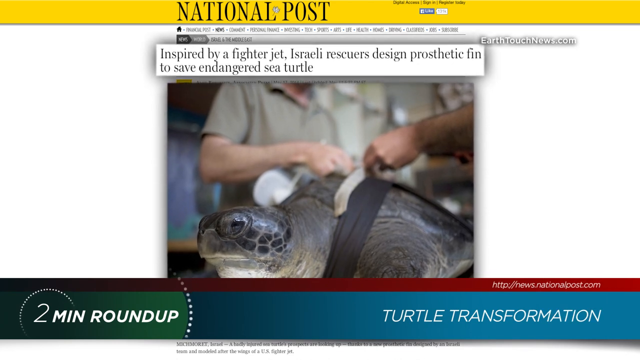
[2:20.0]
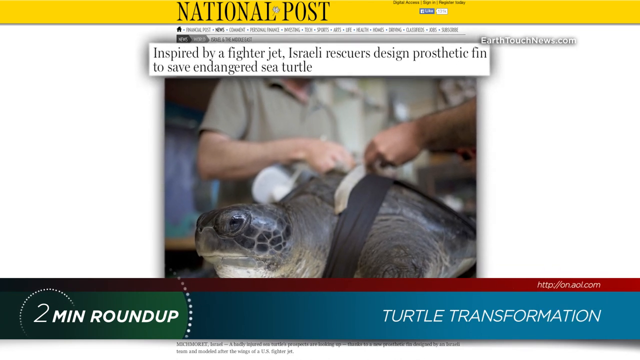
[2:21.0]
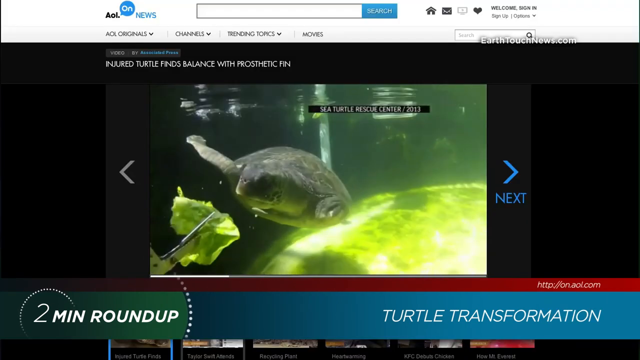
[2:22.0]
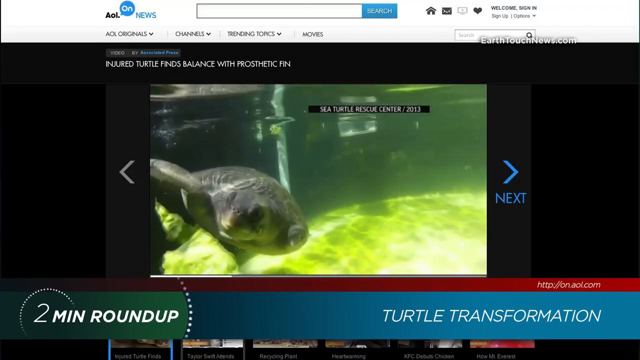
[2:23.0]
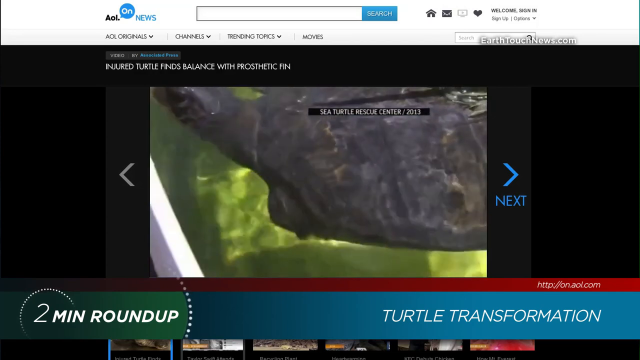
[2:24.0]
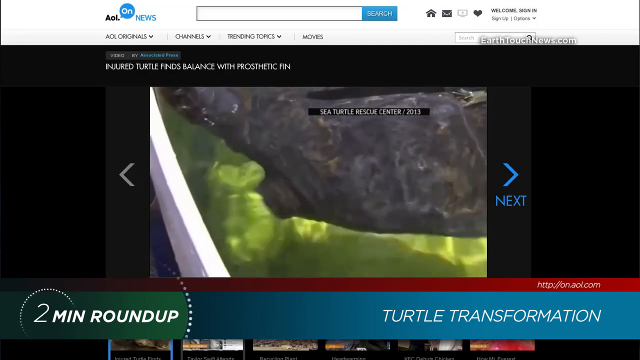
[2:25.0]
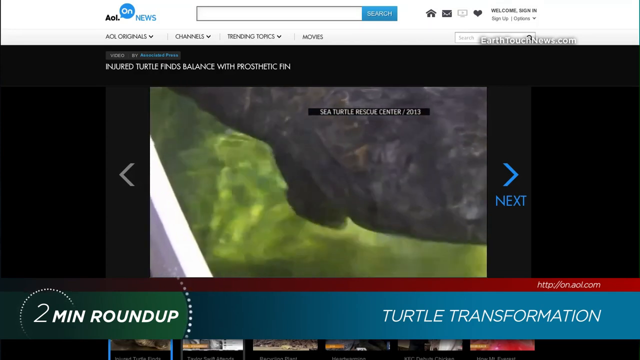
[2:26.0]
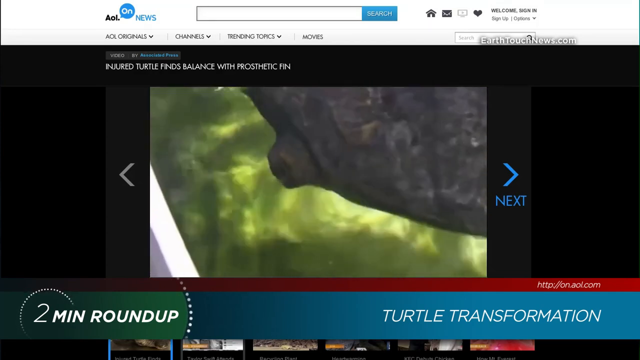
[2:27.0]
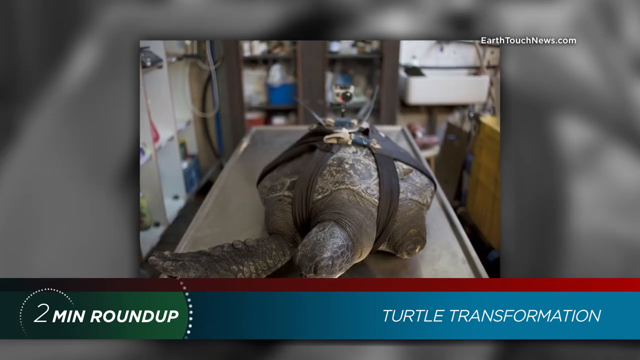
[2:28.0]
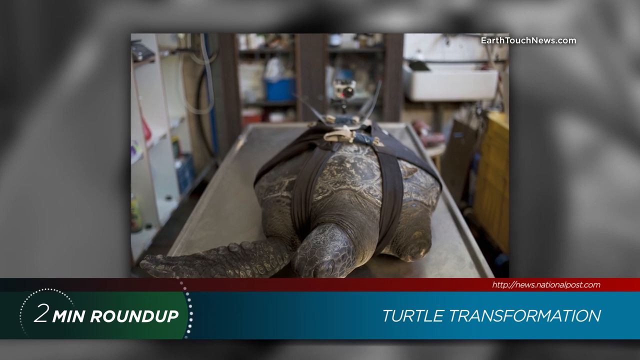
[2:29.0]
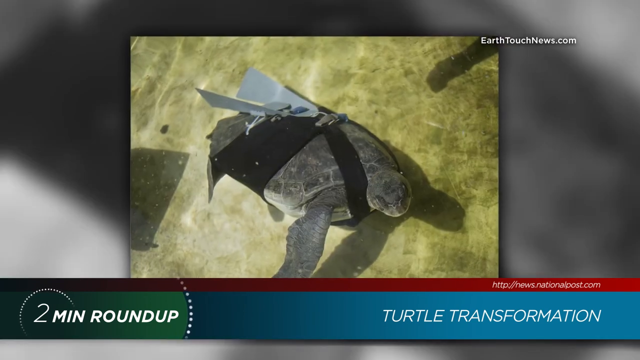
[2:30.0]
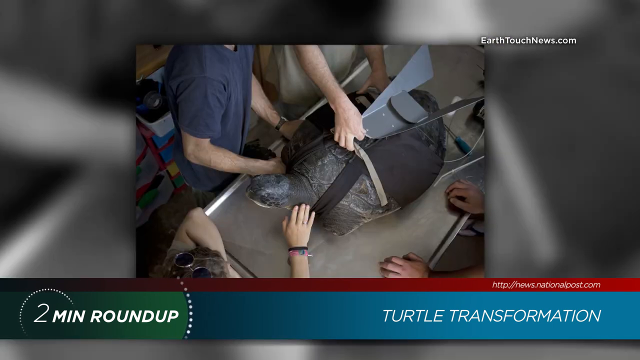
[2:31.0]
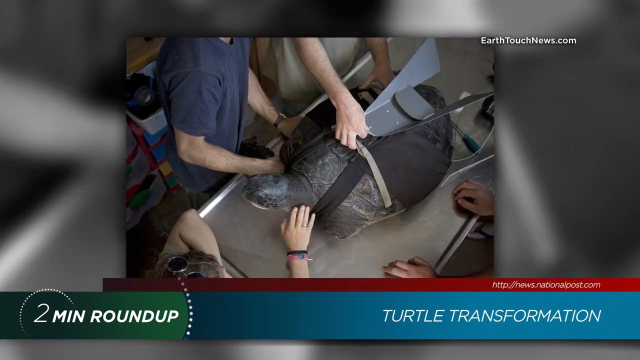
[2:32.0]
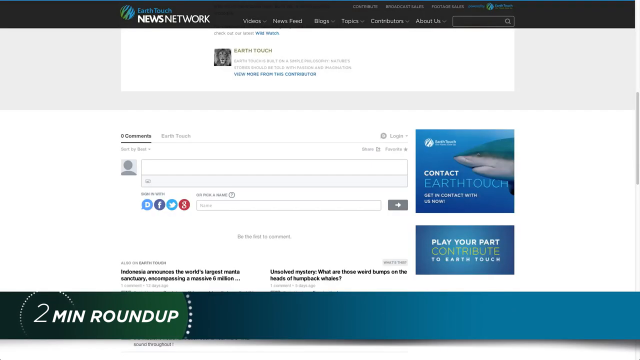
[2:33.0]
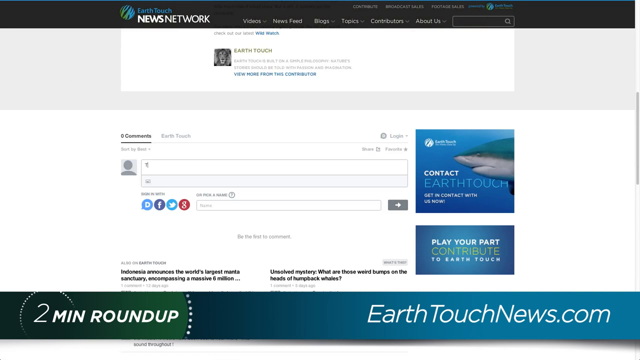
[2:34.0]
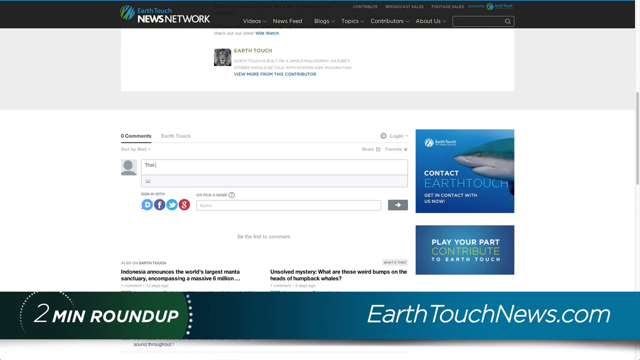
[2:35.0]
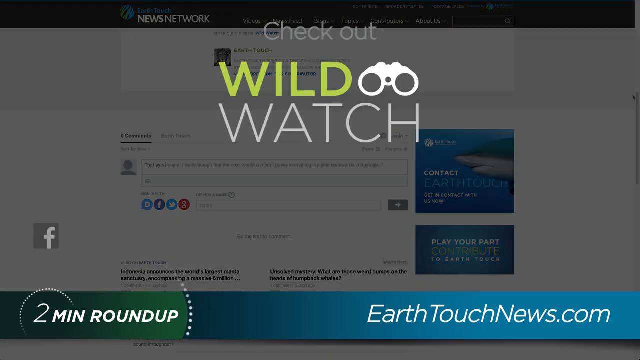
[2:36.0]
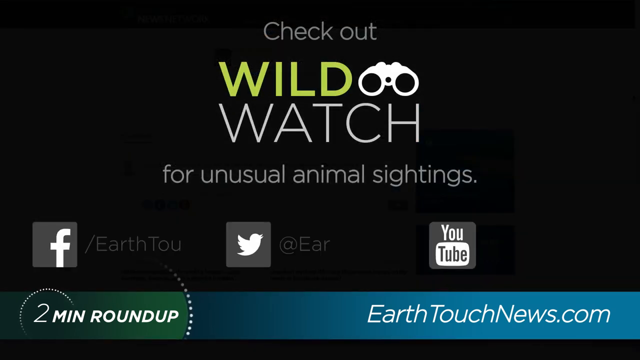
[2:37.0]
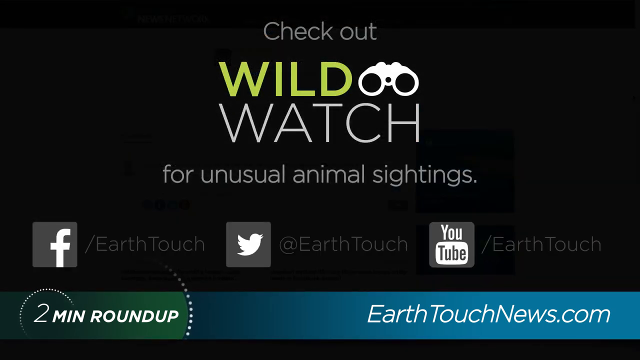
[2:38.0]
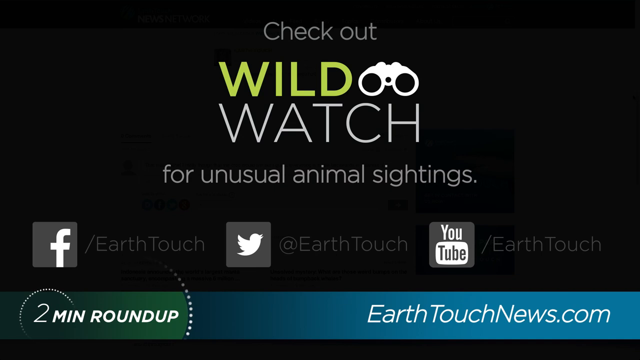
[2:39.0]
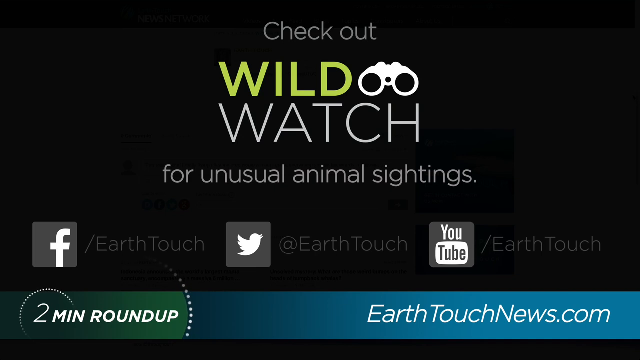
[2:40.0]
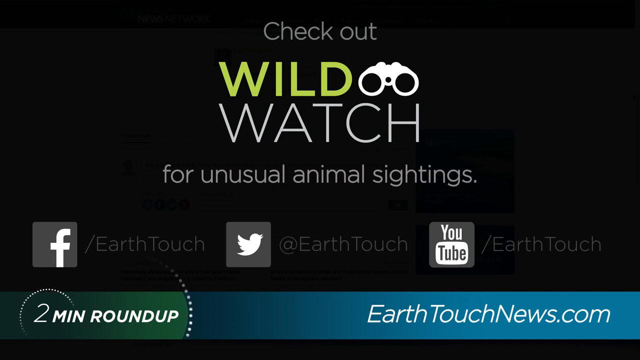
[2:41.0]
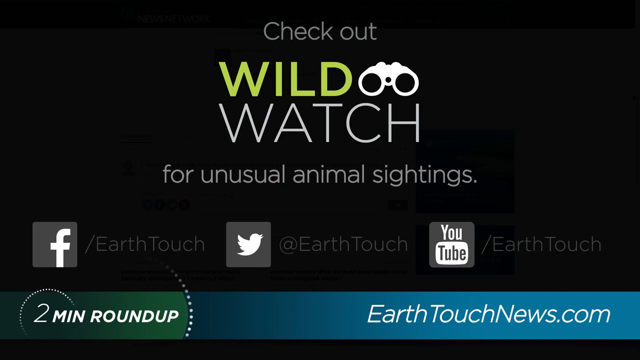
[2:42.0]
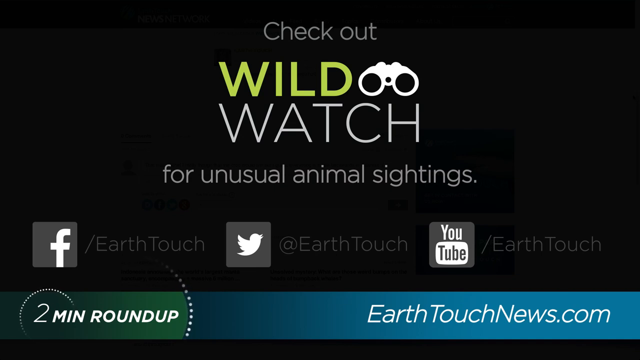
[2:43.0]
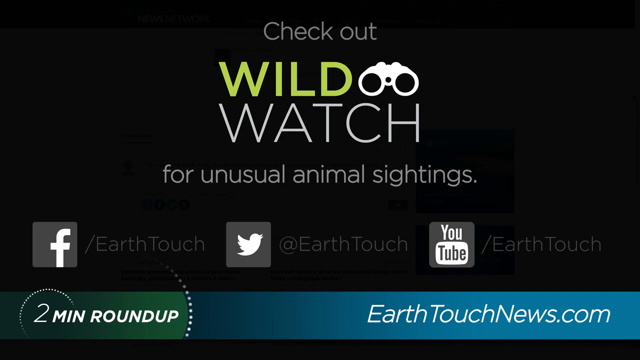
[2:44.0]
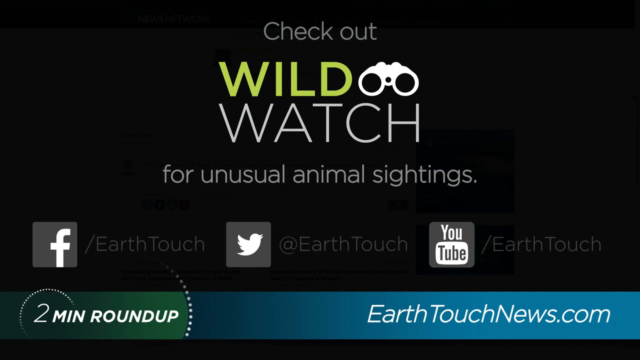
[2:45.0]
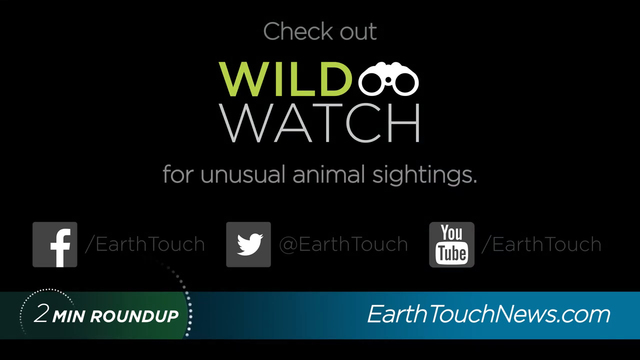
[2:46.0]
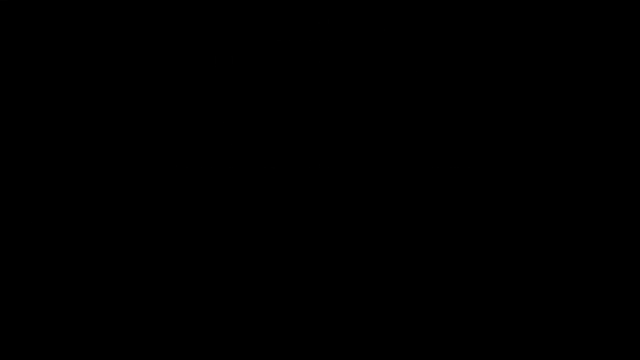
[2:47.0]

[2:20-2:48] An article from the National Post reads "inspired by a firefighter jet, Israeli rescuers design prosthetic fin to save endangered sea turtle," followed by an image of a sea turtle. A video then shows a sea turtle that is missing a fin being fed some lettuce as it tries to swim around in the water. The video zooms in on the missing fin. Next, the sea turtle is on an operating table with black straps around it, and a fin is put on the turtle's back. At the bottom of the screen, someone is writing a comment. At the end, text says "check out WildWatch for unusual animal sightings," followed by the Facebook page, the Twitter page, and the YouTube page for following EarthTouch.